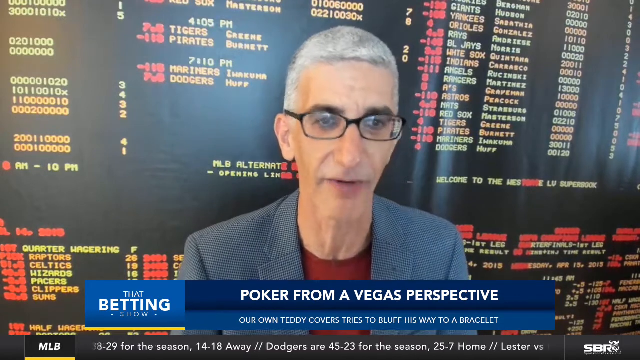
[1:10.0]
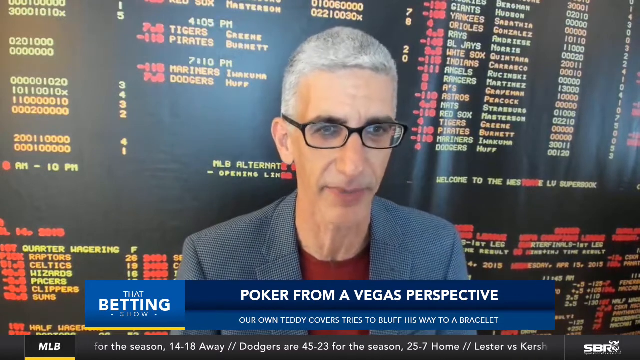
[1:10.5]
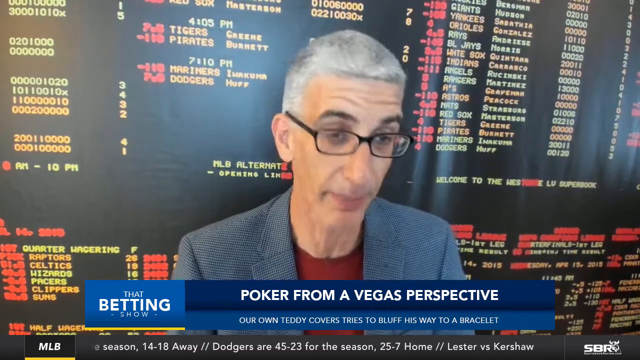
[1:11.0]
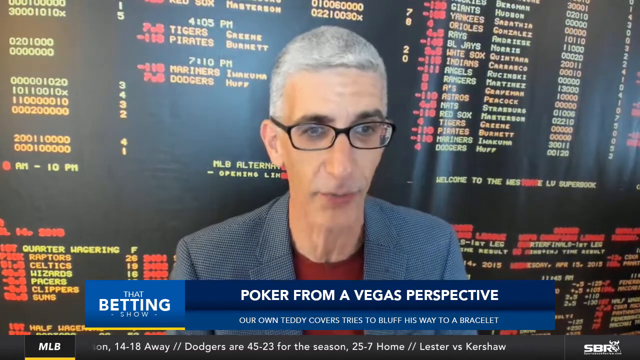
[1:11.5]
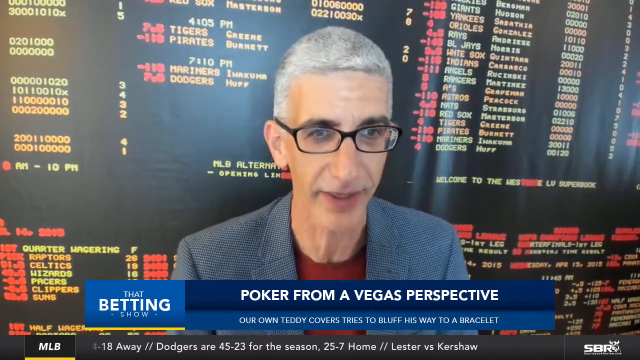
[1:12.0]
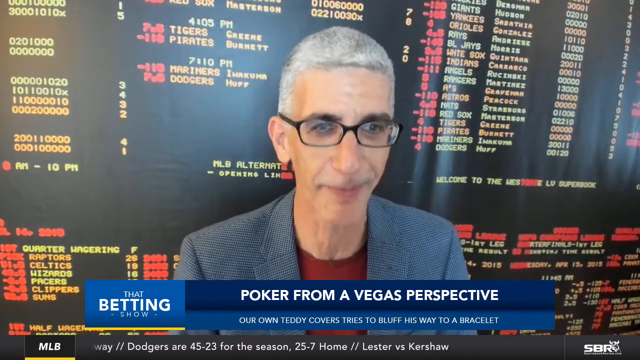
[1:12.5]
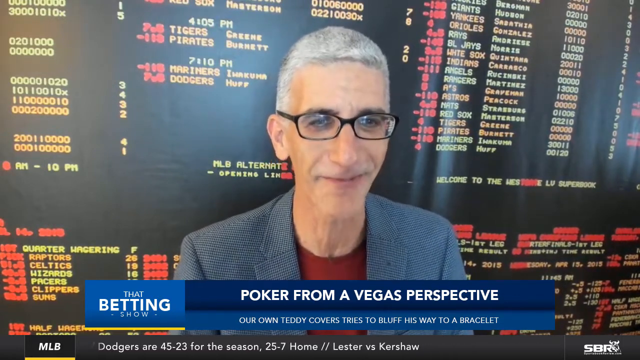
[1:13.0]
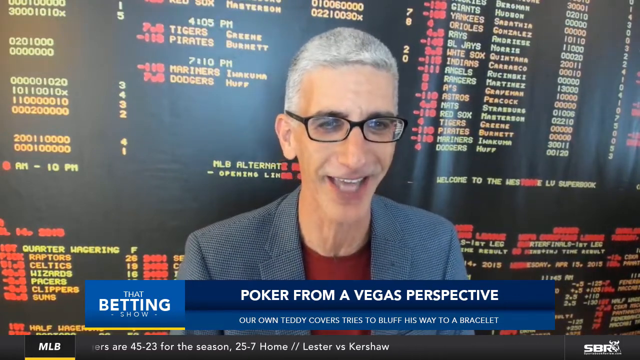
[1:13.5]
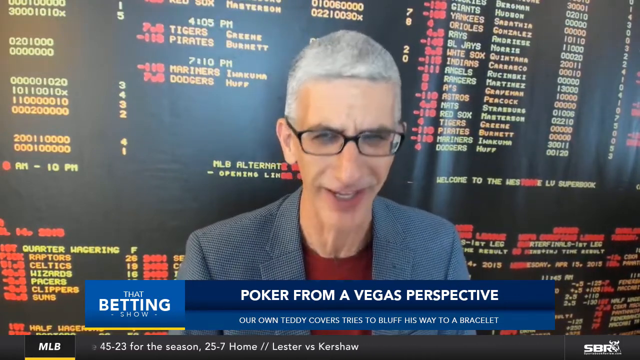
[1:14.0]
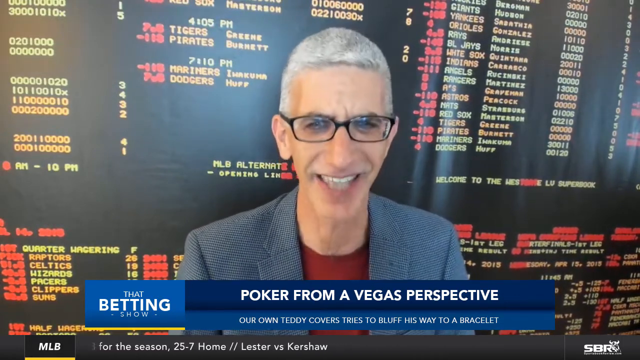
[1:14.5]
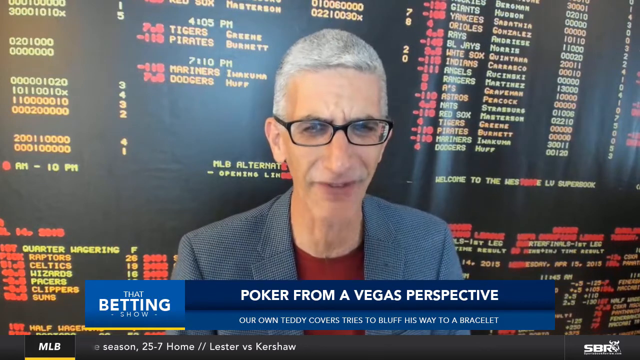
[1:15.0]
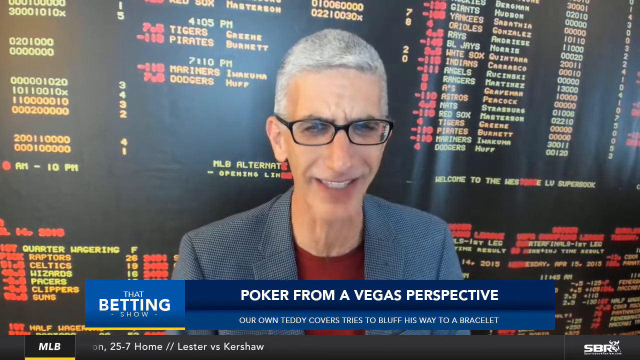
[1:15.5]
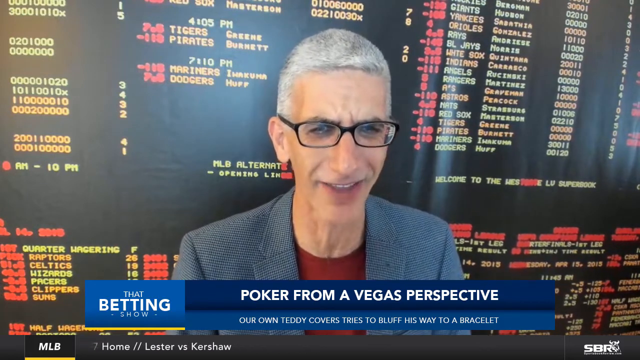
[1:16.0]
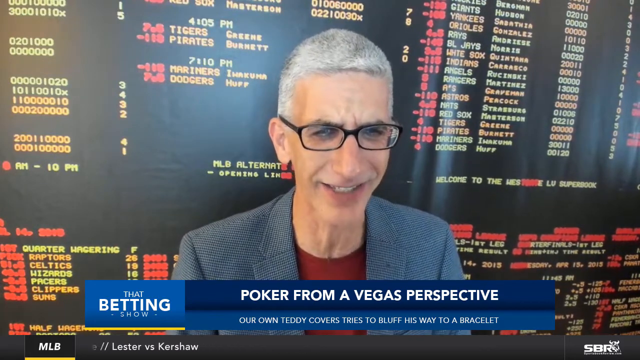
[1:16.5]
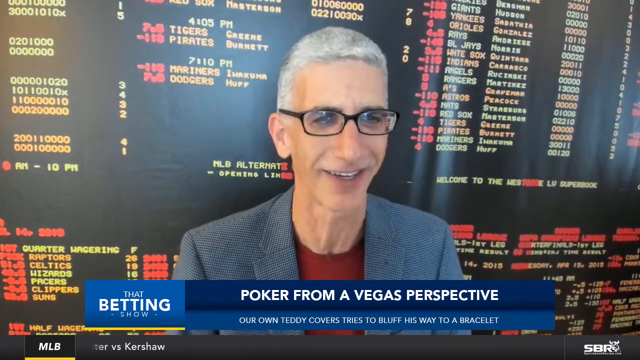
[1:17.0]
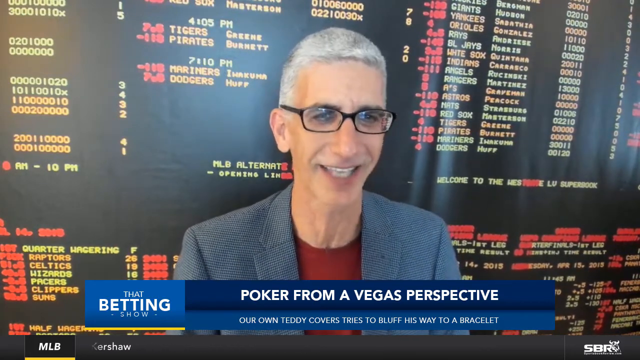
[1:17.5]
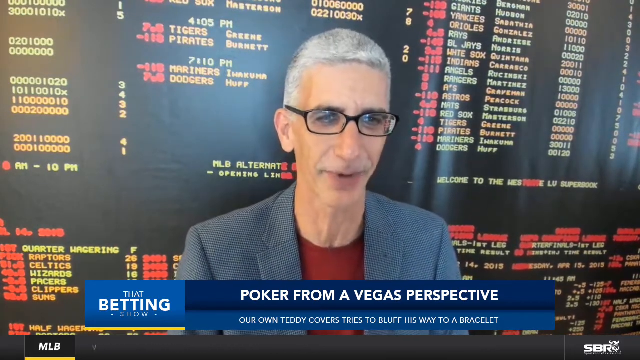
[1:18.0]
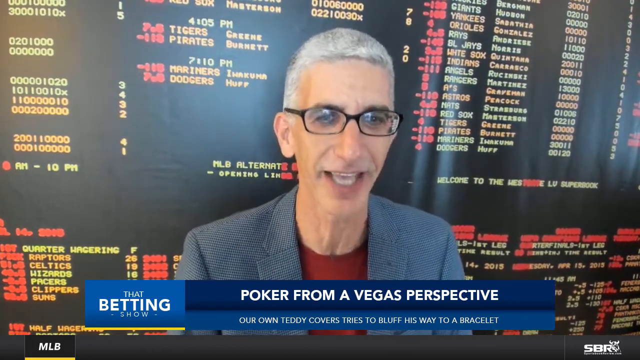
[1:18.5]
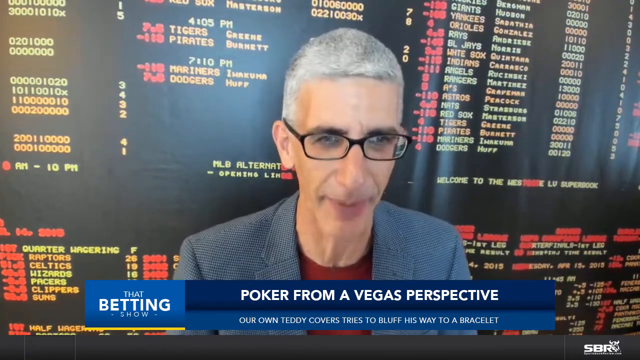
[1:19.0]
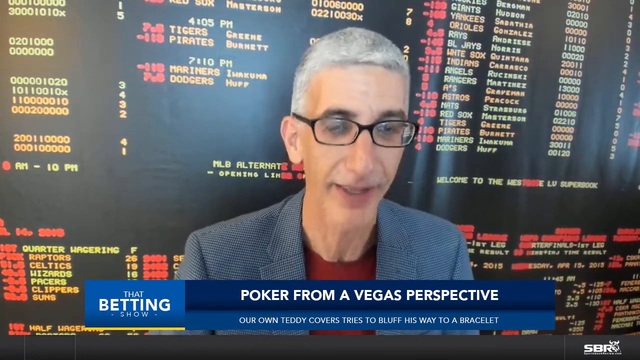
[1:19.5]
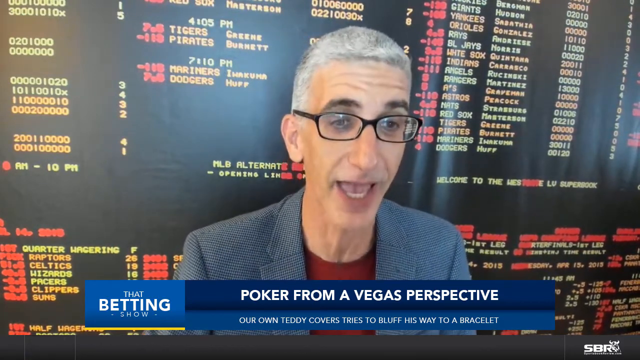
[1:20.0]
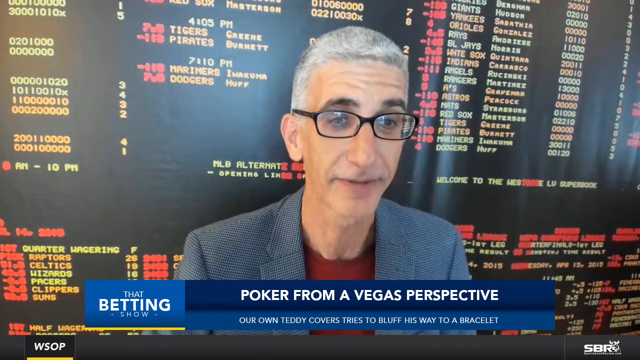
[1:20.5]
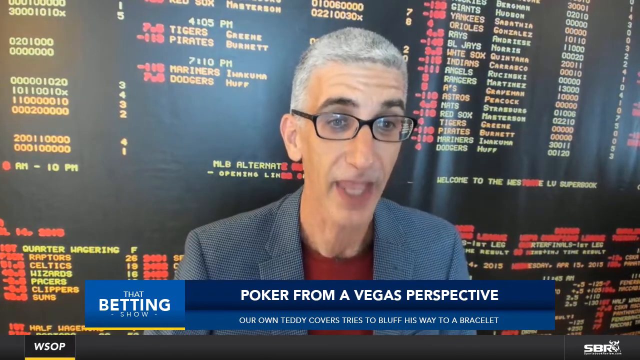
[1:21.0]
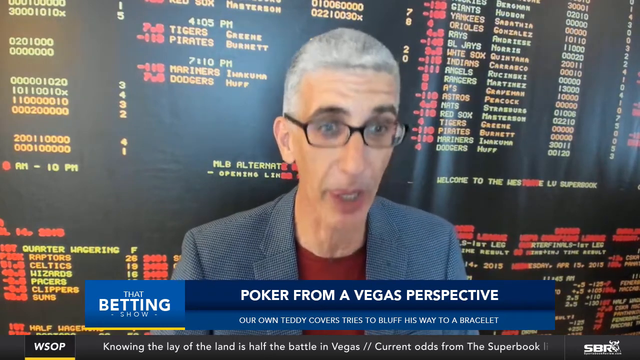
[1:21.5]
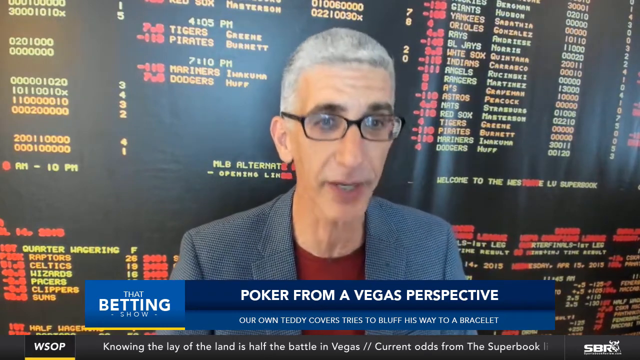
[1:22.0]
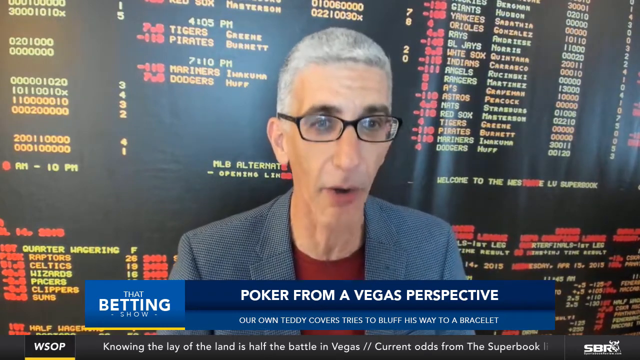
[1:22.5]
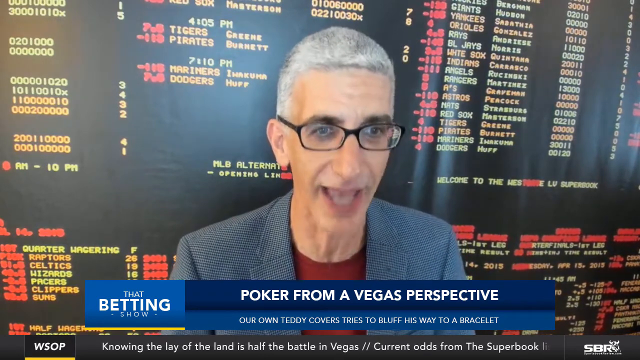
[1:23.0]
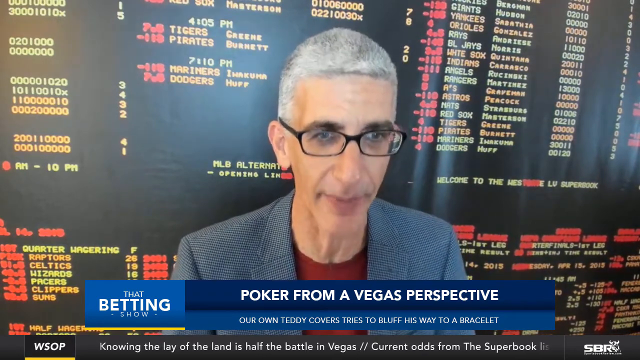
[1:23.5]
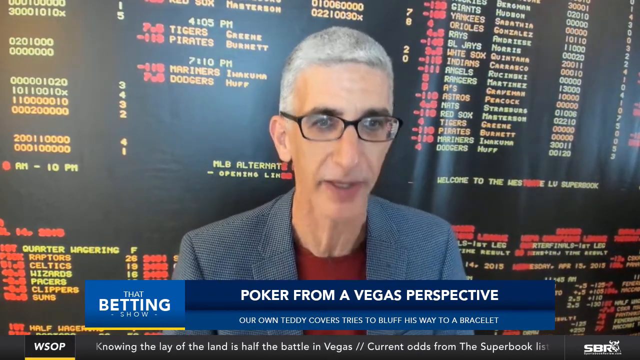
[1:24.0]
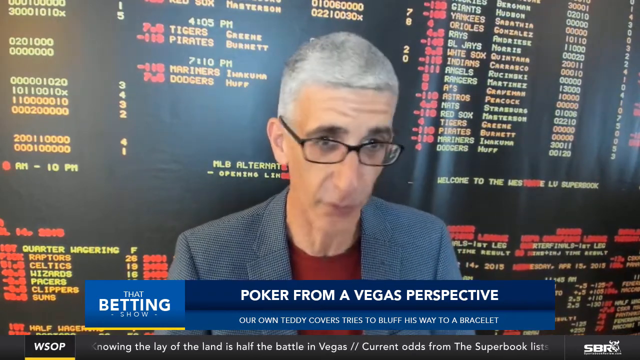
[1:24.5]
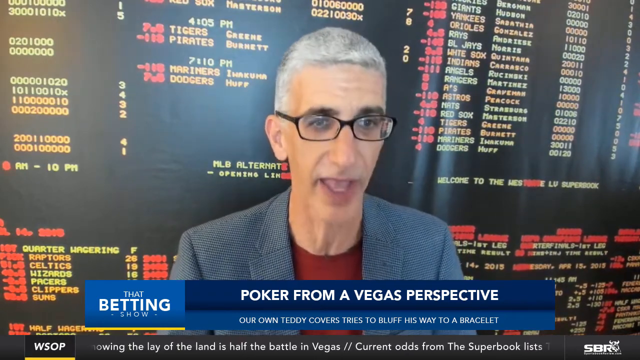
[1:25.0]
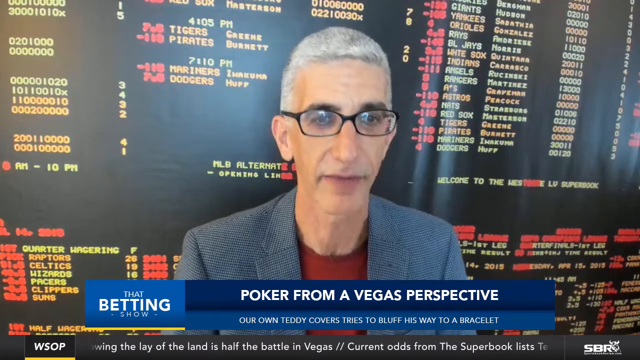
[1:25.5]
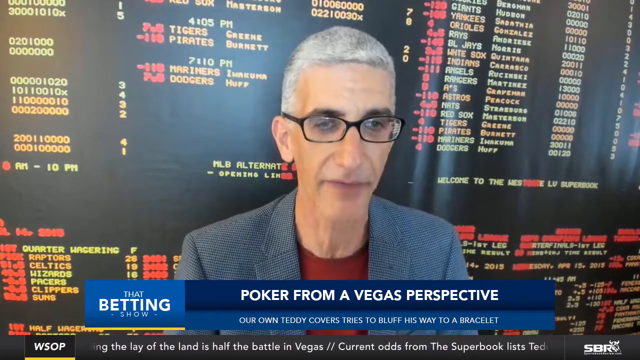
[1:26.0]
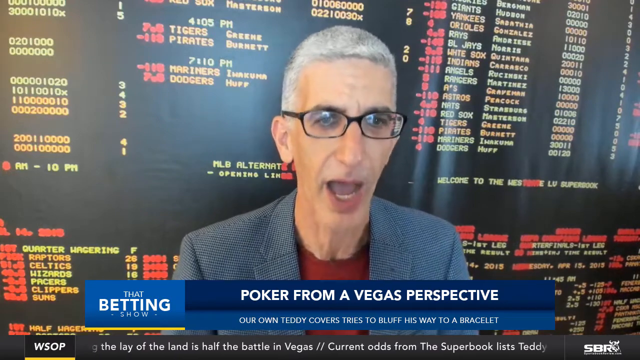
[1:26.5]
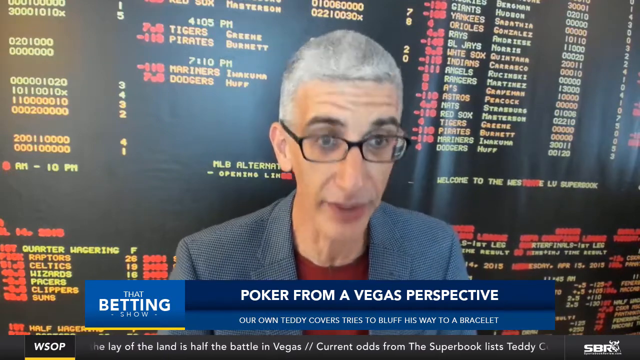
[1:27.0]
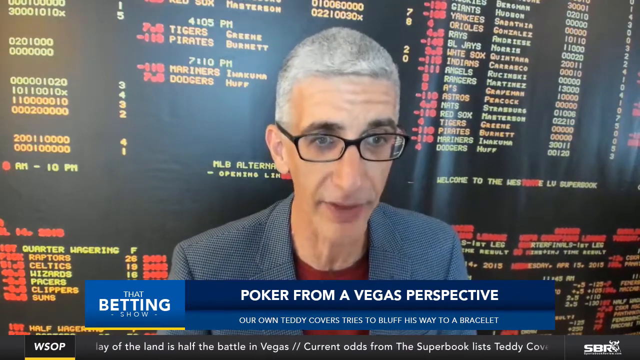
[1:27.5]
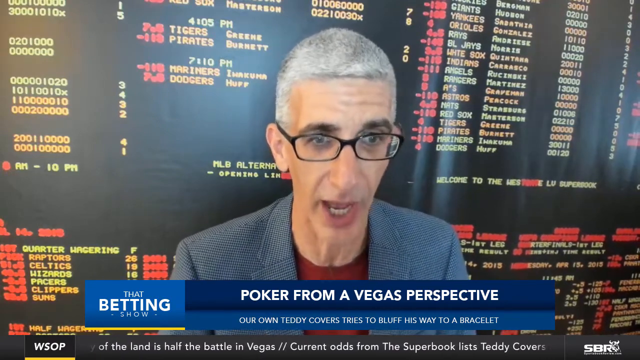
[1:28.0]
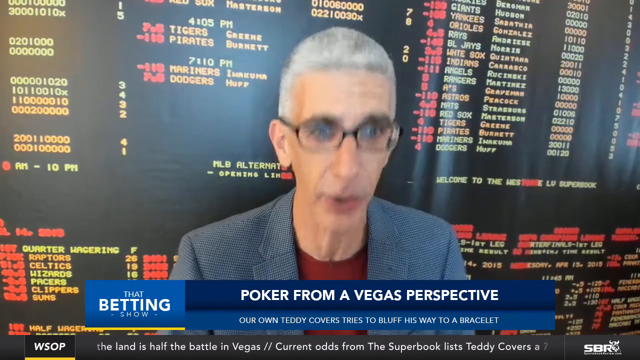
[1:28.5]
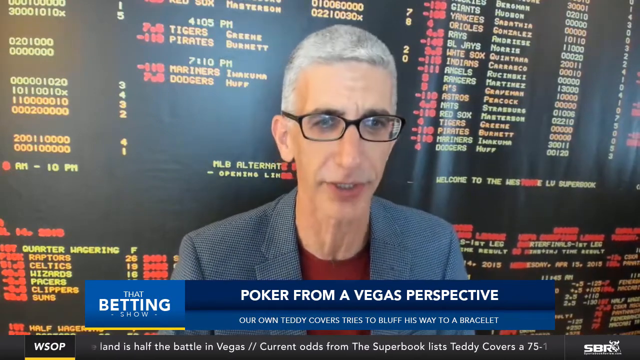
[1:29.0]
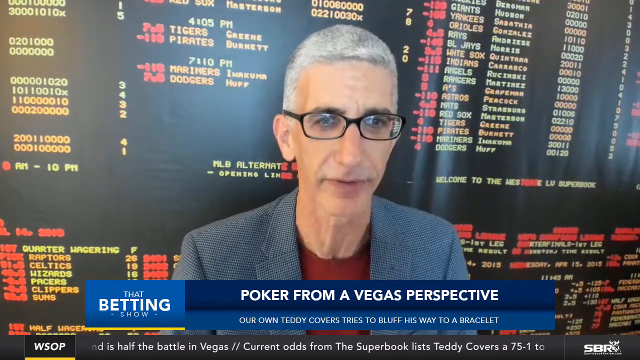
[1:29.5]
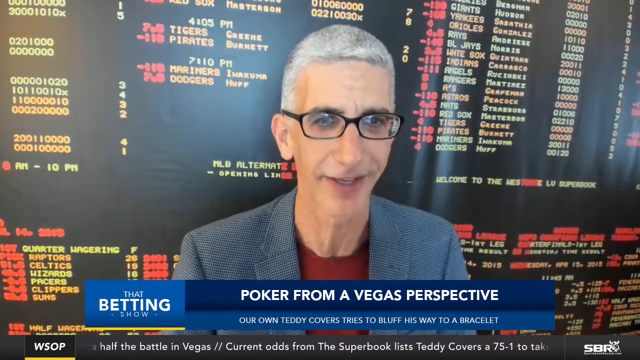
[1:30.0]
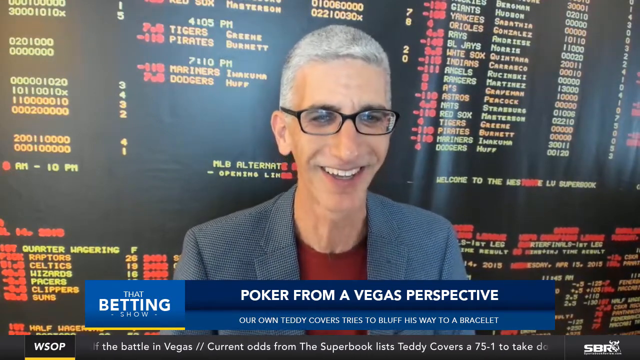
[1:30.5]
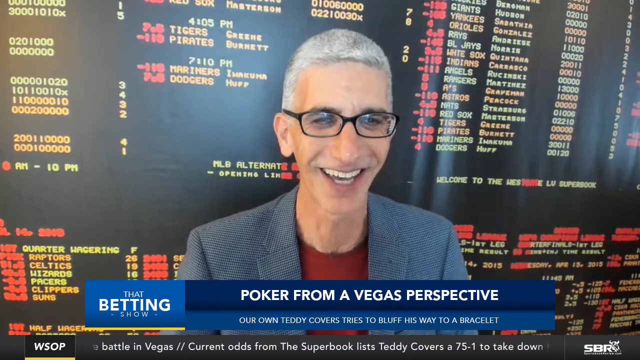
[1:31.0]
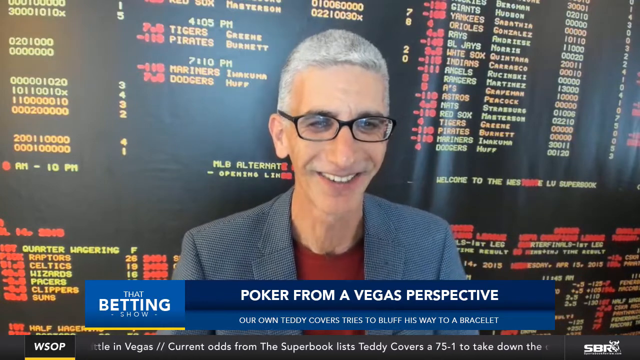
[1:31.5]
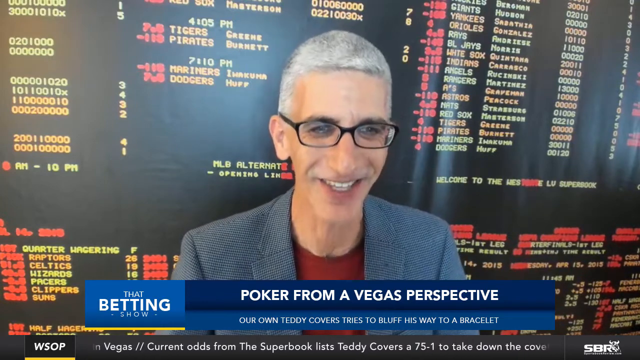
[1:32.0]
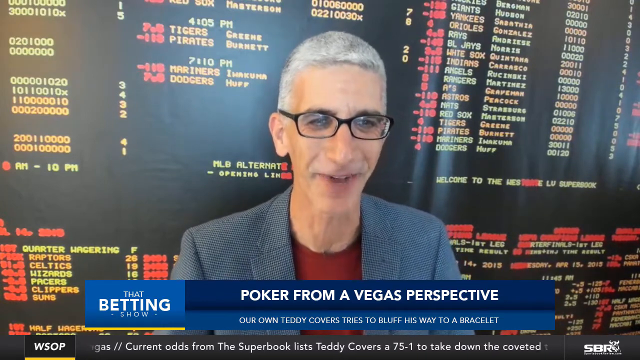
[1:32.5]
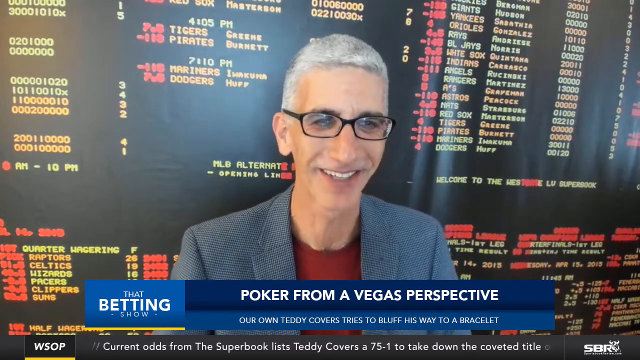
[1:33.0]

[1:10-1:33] The skinny man with glasses continues to talk, angled slightly so that he looks past the viewer's right shoulder rather than straight at the camera. He looks a little older, with short gray and white hair, kind of salt and pepper, and dark eyebrows. His mouth moves very fast, his head nods upward and his eyebrows rise as he talks, and sometimes he smiles; he is fairly animated. He wears the gray jacket, which looks like cloth or tweed, and beneath it a red shirt that is more like a t-shirt, kind of a burgundy red. The crawl at the very bottom now says "WSOP", with slow text scrolling right to left, such as "Current odds from the Superbook lists Teddy Covers a 75 to 1 to take down the coveted title". The video screen behind him and the graphic below him are static.